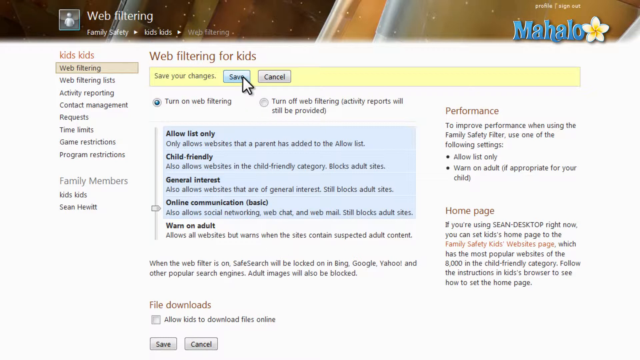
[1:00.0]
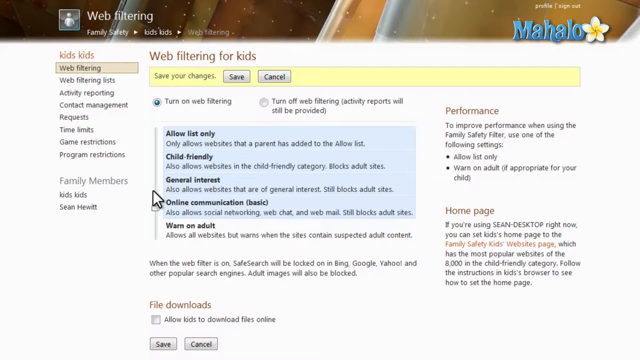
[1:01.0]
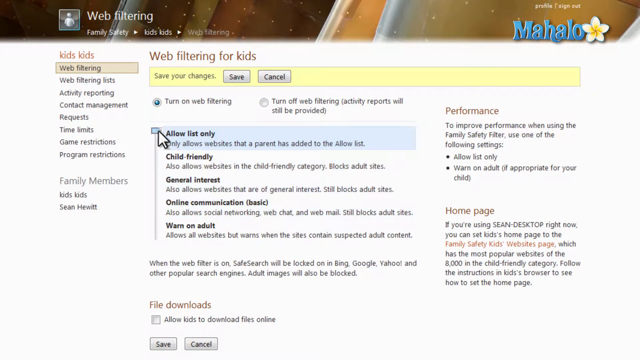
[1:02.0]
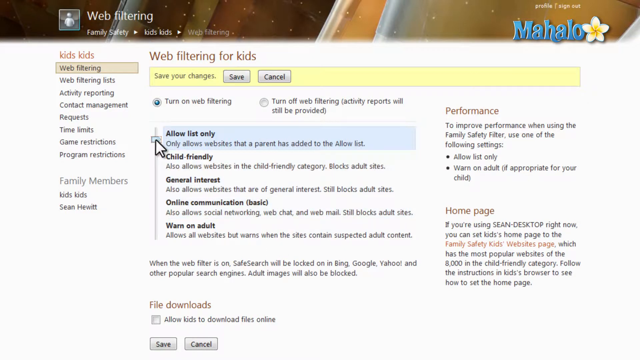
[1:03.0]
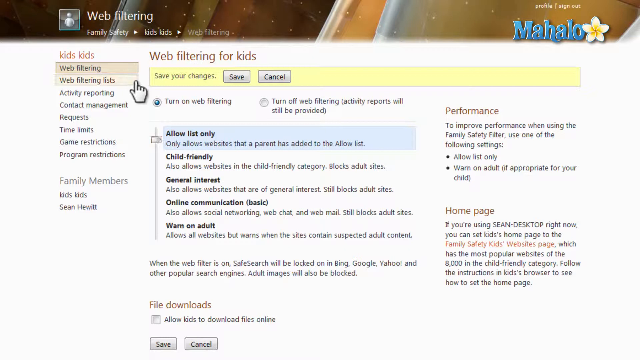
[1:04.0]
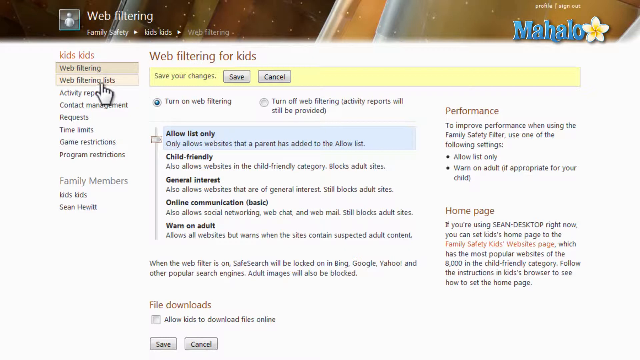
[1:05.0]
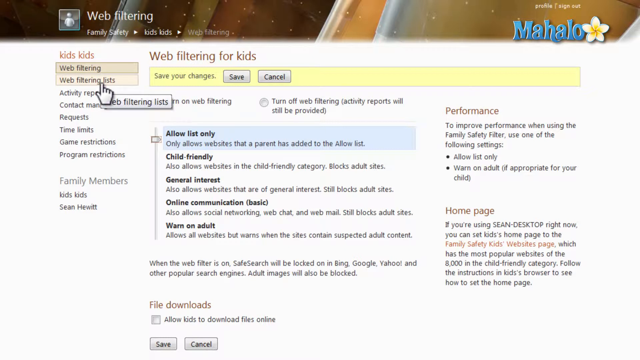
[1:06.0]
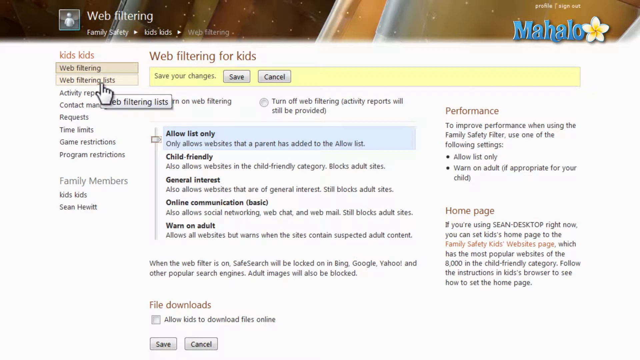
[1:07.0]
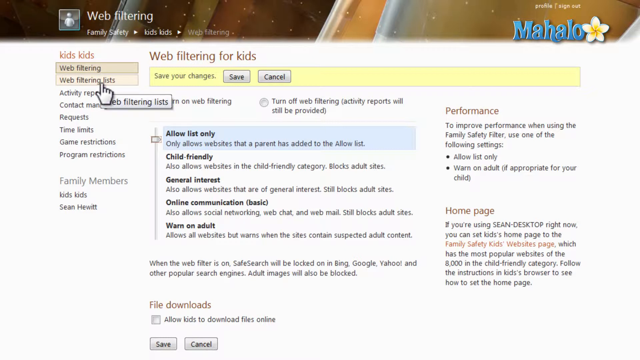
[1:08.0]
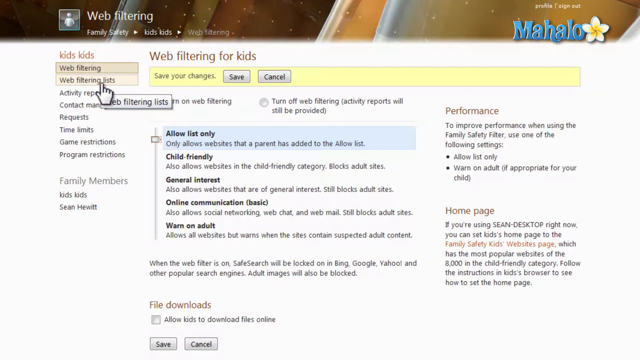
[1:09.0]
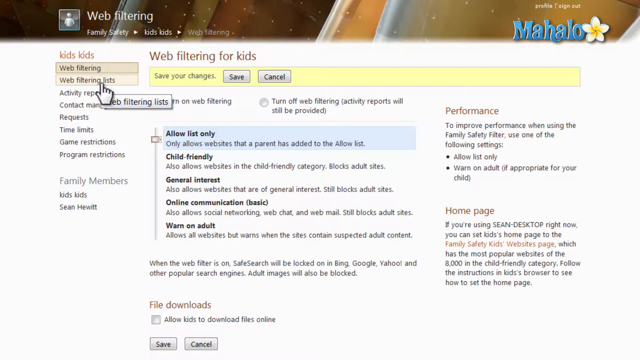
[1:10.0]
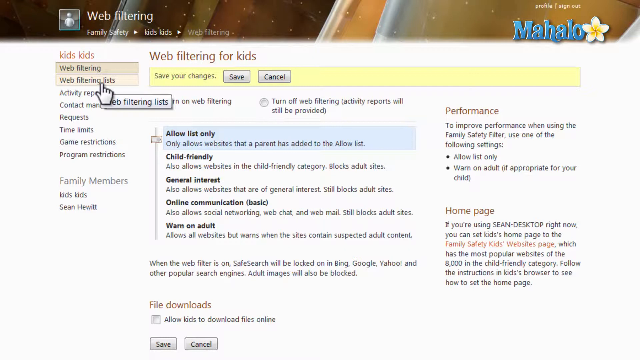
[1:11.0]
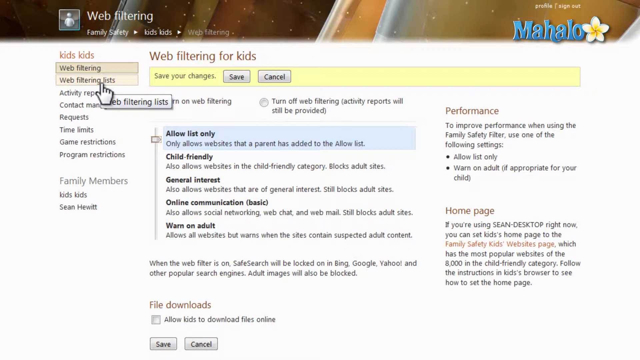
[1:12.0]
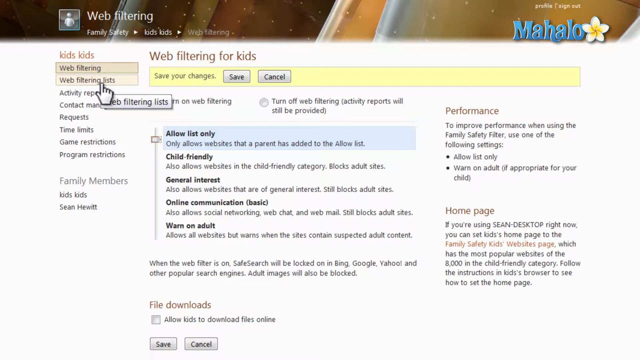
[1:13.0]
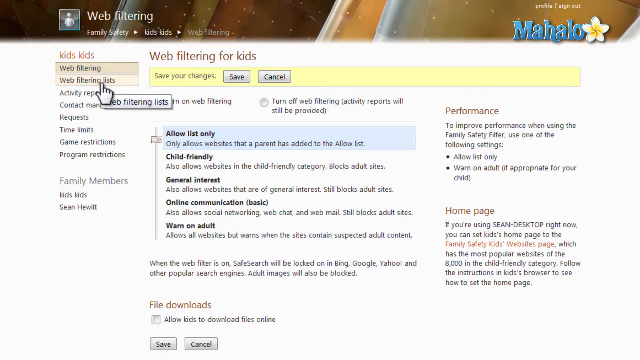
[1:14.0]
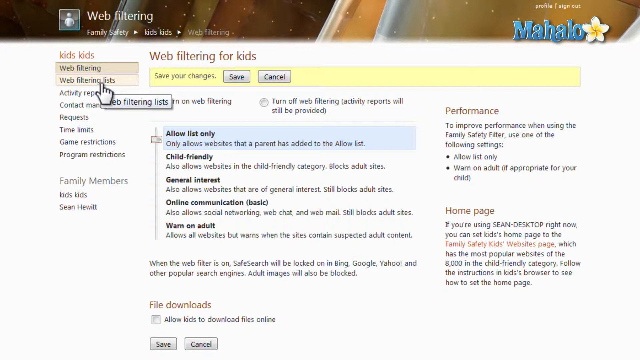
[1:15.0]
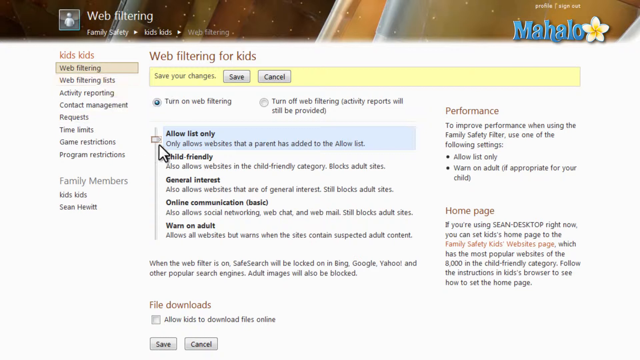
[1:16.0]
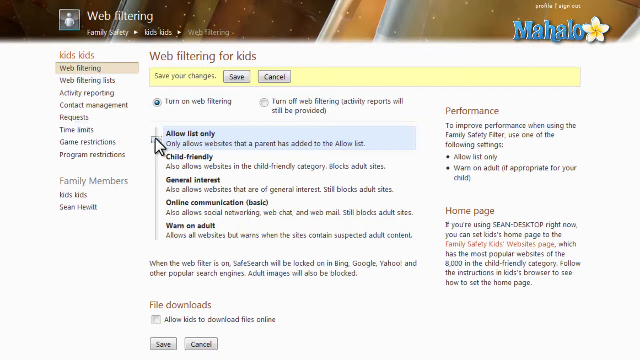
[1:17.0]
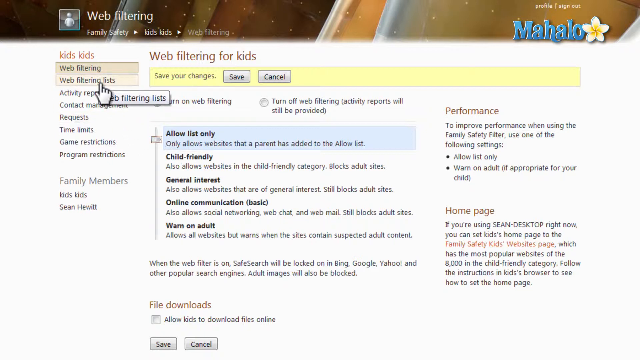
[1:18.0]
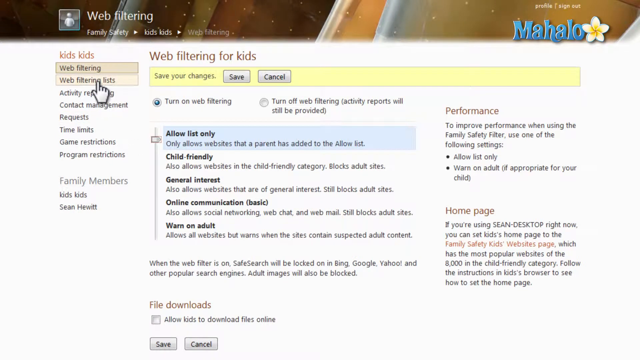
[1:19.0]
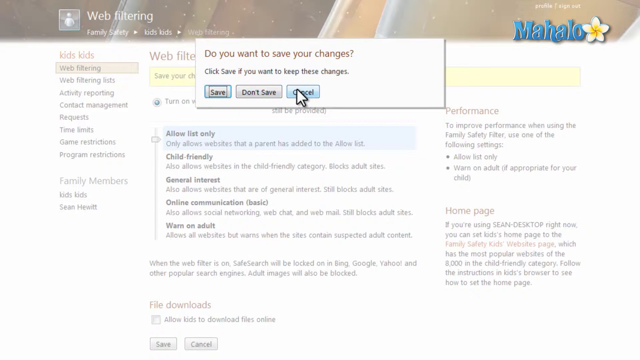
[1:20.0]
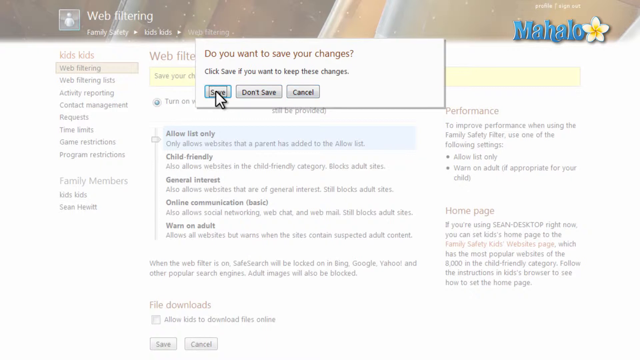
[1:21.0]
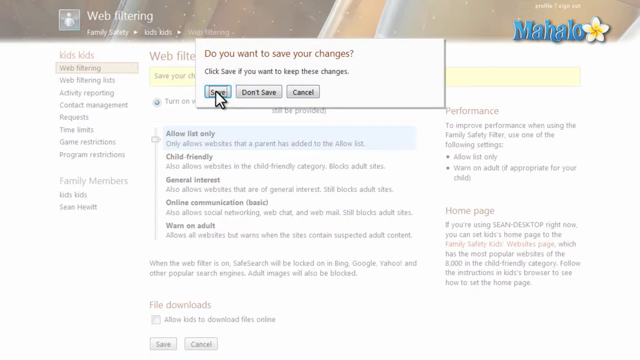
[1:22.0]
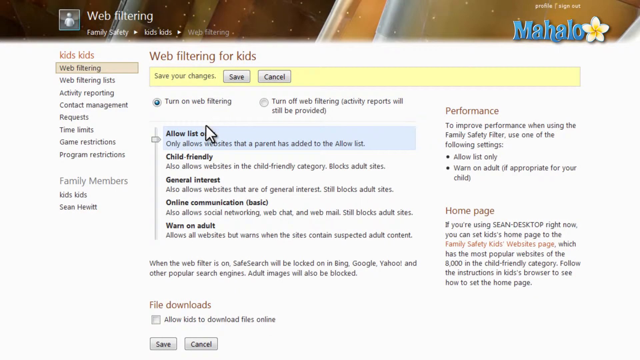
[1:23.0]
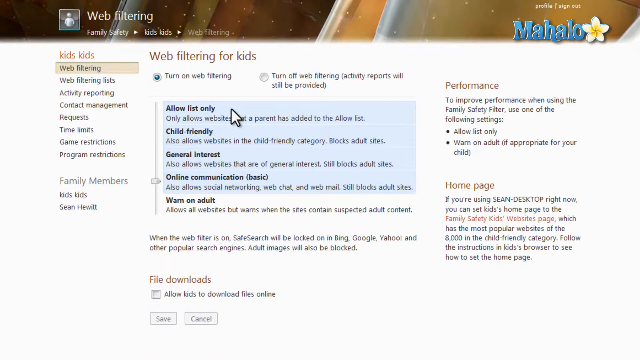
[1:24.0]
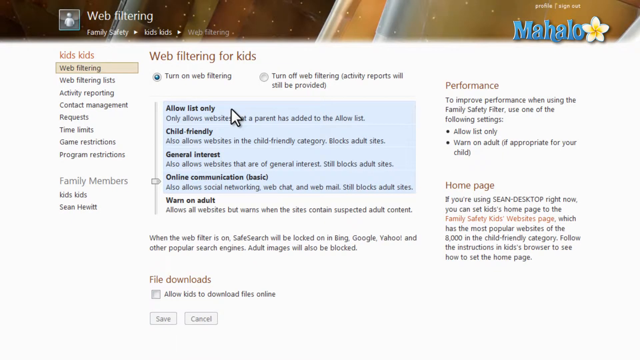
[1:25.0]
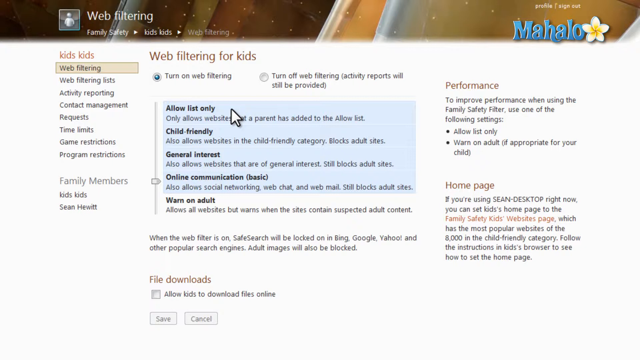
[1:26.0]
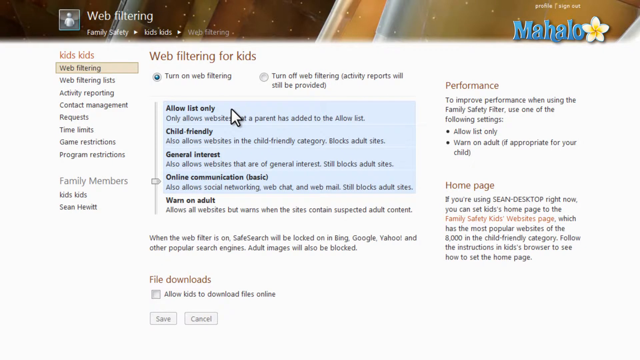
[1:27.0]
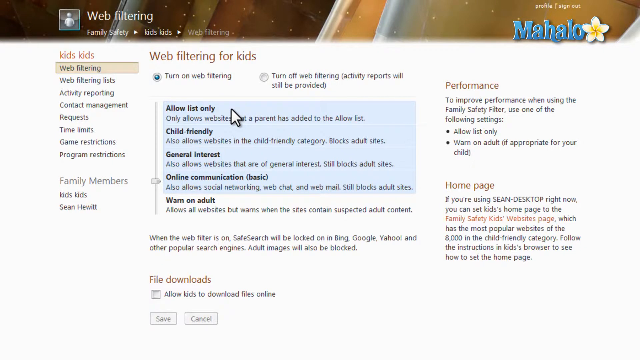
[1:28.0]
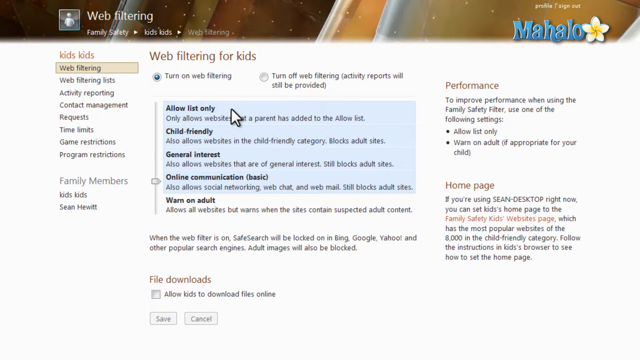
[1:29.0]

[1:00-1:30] At the top, right underneath "web filter for kids", it reads "save your changes." When the cursor goes over the save button it turns blue, and to its right is a white cancel button. The cursor goes back down to the vertical slider and slides it up to "allow list only", then moves over to the web filtering list under web filtering, going back and forth with the cursor to "allow list only". He then clicks the web filtering list, and a pop-up box asks "do you want to save the changes" with save, don't save and cancel buttons. The cursor moves between them, then goes over save and clicks it, and the page apparently reverts to the chosen settings. The current options are "turn on web filtering", the left option, and "online communication basic". One column shows "kids kids" with about eight or nine different options; "web filter for kids" has the two options to turn filtering on and off beneath it; and the right-hand column shows "performance", two bullet points and a home page area with a clickable link for "Family Safety Kids".